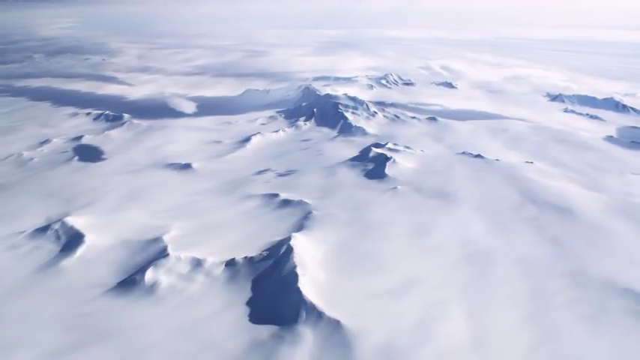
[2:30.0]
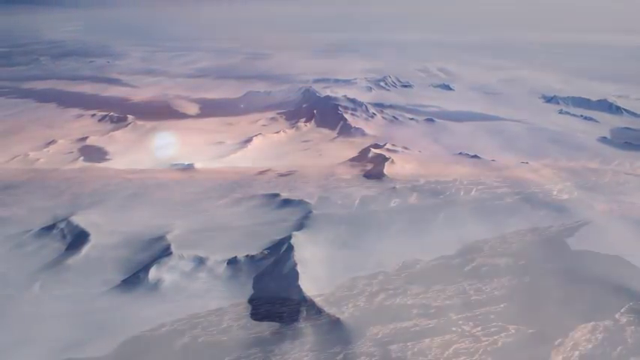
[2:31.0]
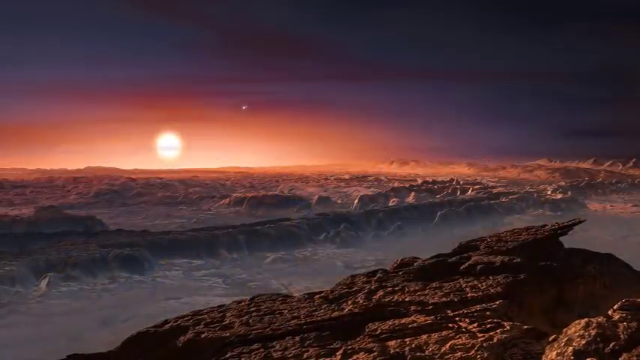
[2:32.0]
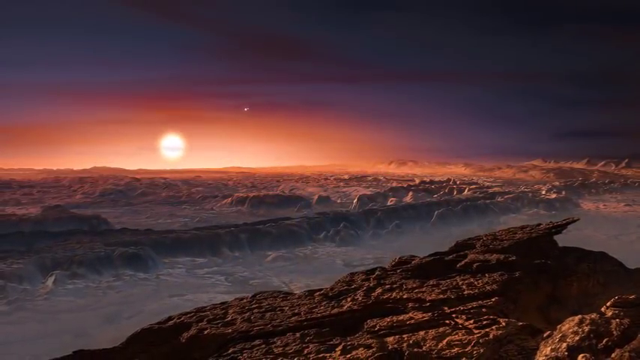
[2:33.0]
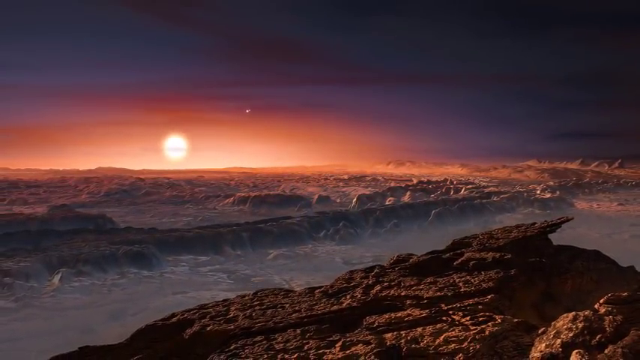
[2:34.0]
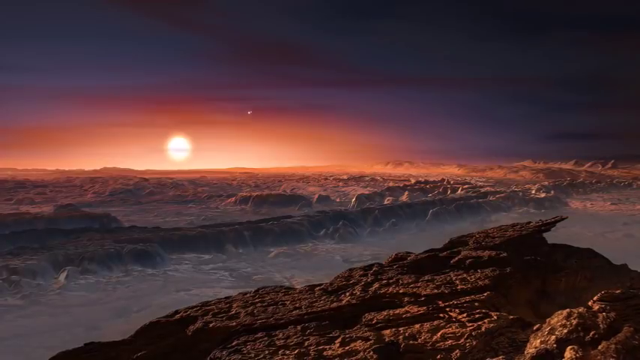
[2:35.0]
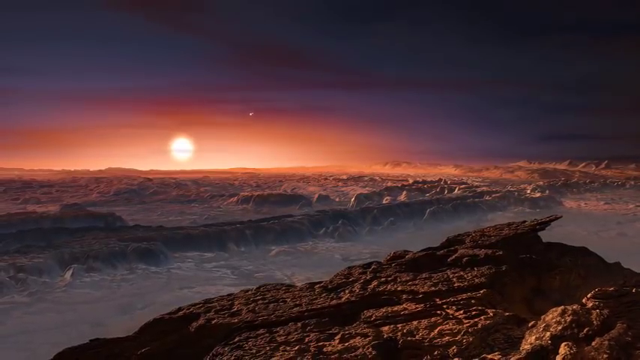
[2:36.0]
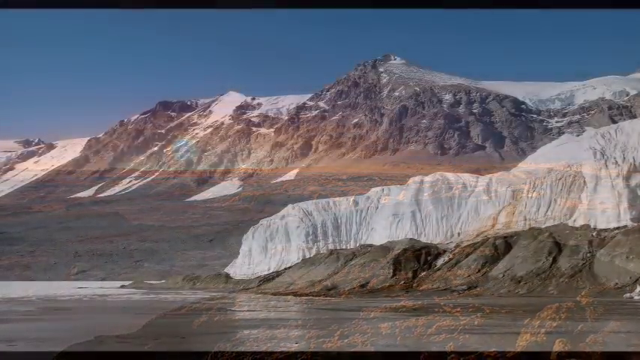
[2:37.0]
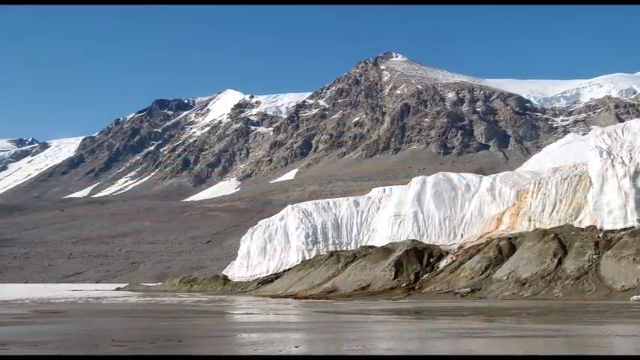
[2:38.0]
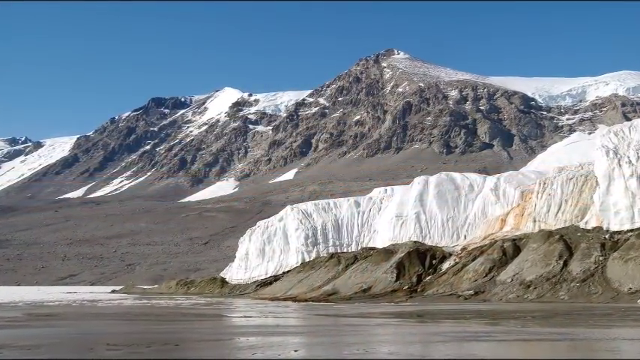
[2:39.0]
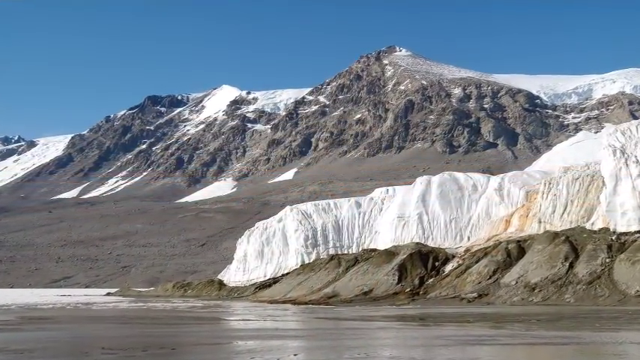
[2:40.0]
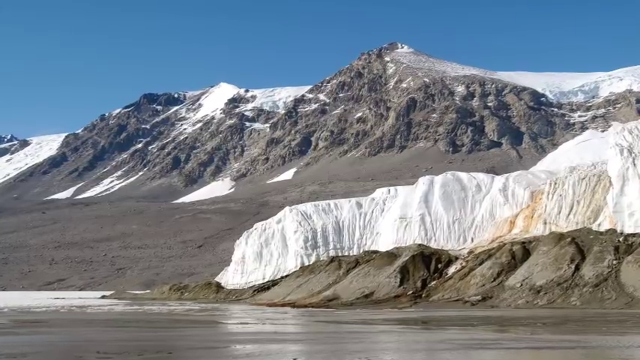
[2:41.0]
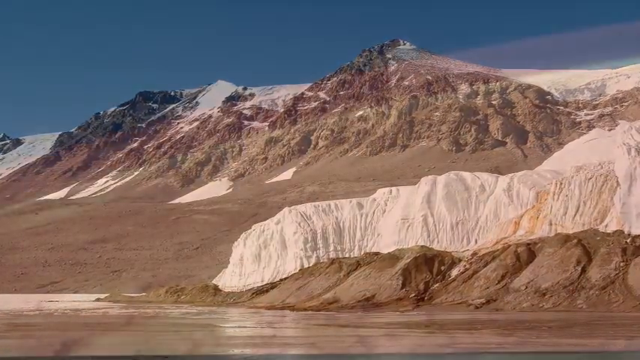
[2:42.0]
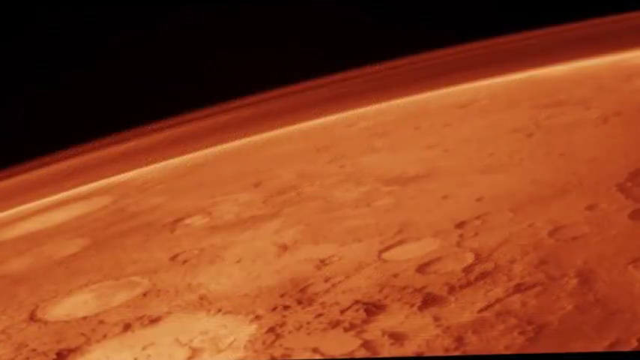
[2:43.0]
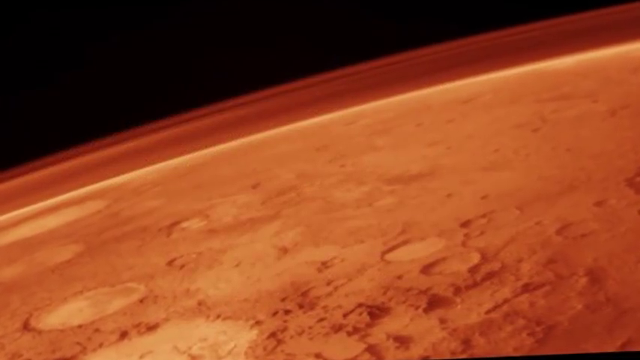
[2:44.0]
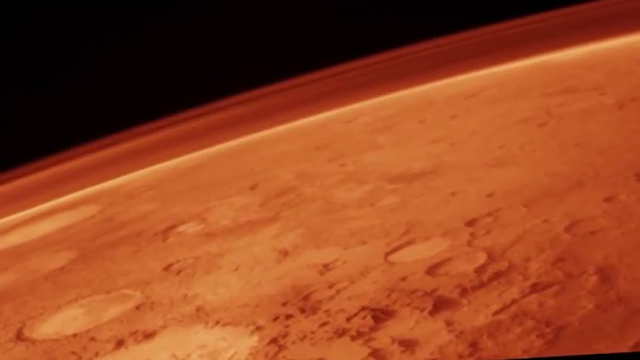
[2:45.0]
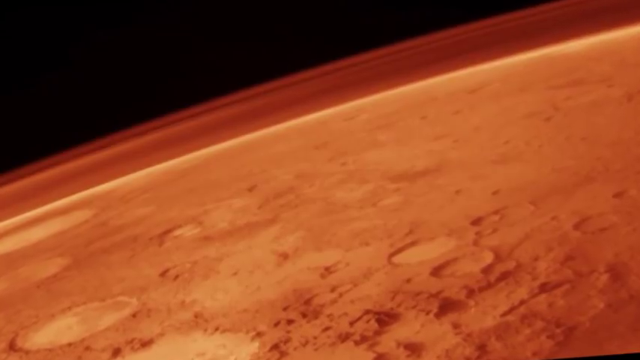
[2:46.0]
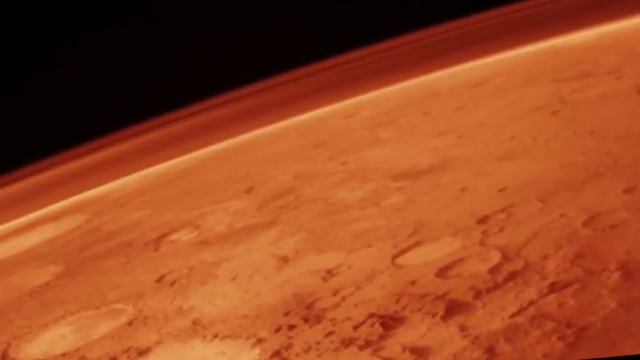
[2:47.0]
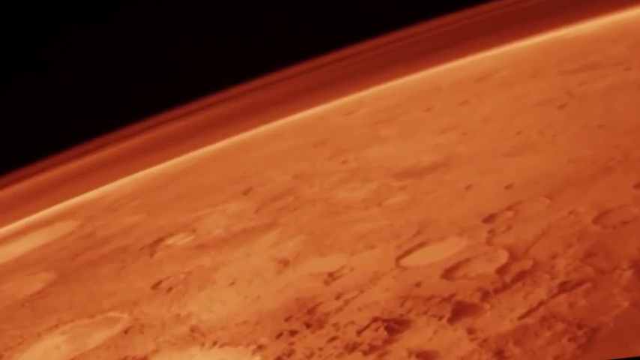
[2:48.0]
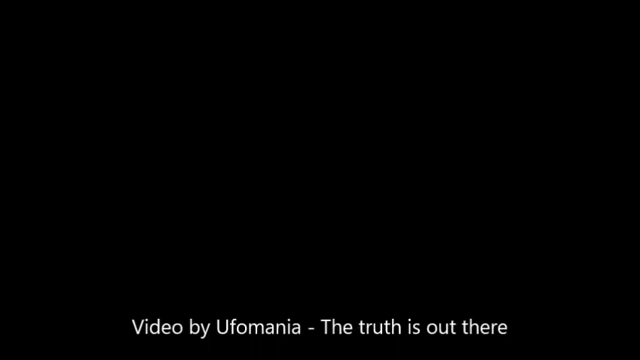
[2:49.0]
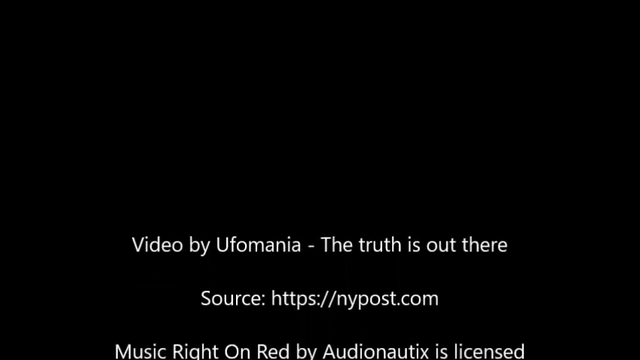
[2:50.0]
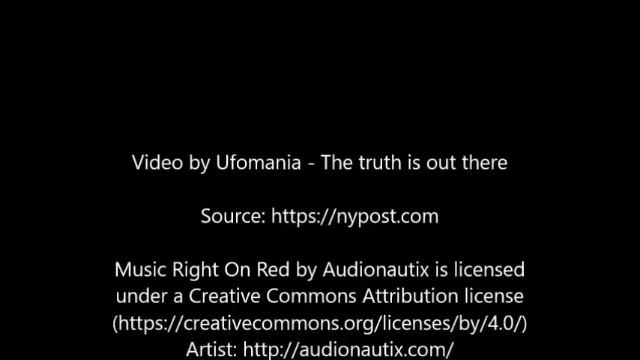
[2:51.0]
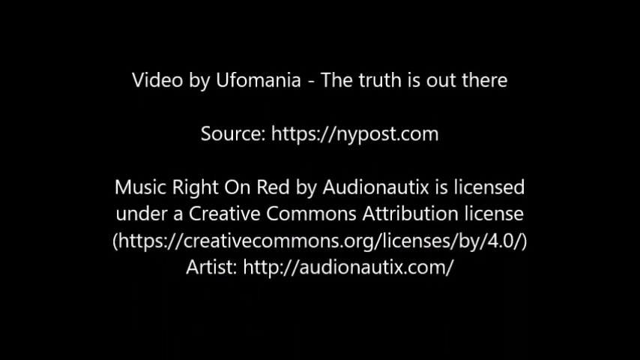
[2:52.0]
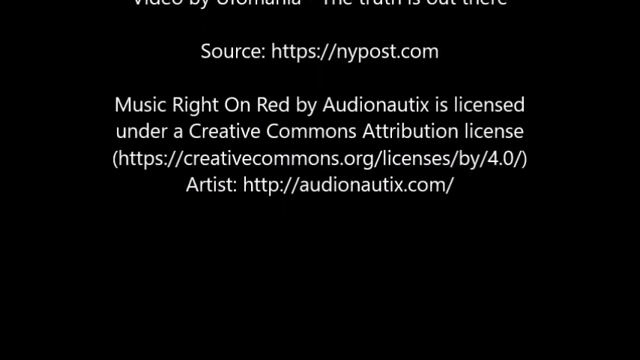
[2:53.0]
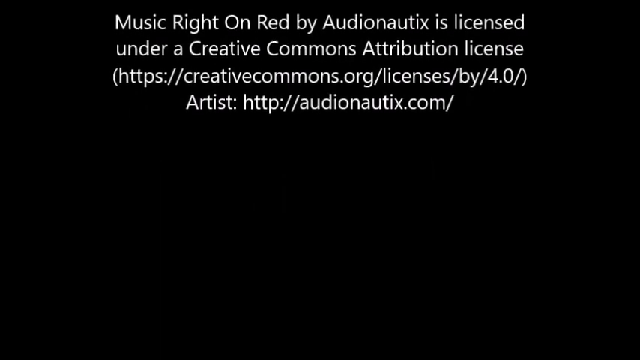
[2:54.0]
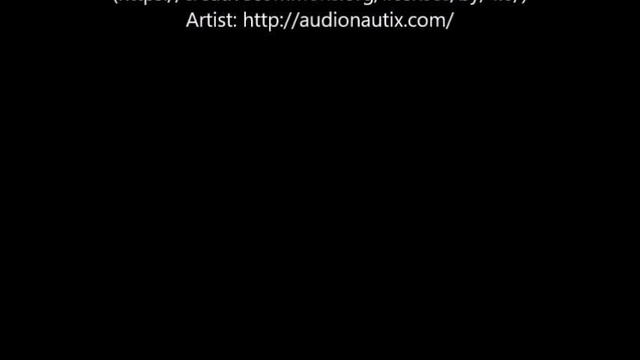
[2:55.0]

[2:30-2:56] A slideshow of photos appears. First is a sky-view photo of a place with clouds. Then the earlier photo of mountains leading to the sunset appears again, followed by the earlier photo looking up from the rocks toward mountains with ice on them and a clean field with brown ground. The picture of the brown planet with many holes, smaller and bigger, seemingly the one shown earlier, appears again. Finally, information text credits the video to "ufo mania the truth" with the source "the truth is out there," along with a music credit under a "creative commons attribution license."